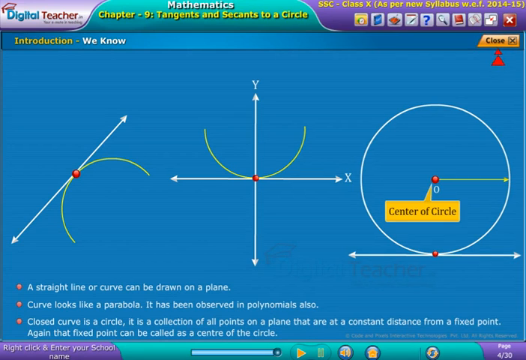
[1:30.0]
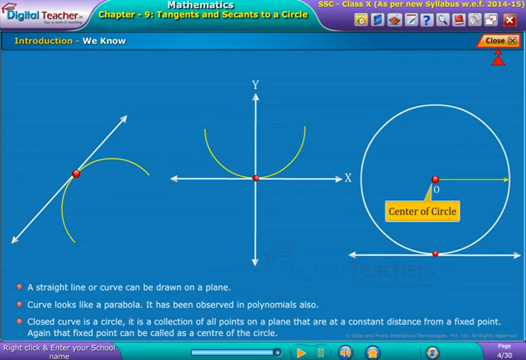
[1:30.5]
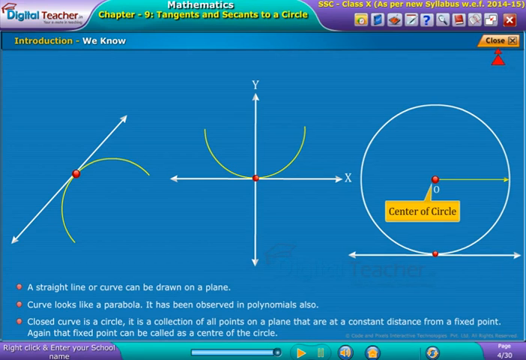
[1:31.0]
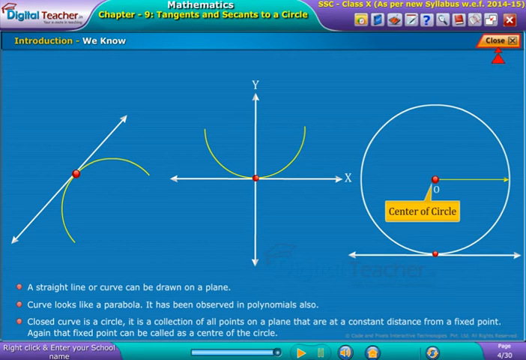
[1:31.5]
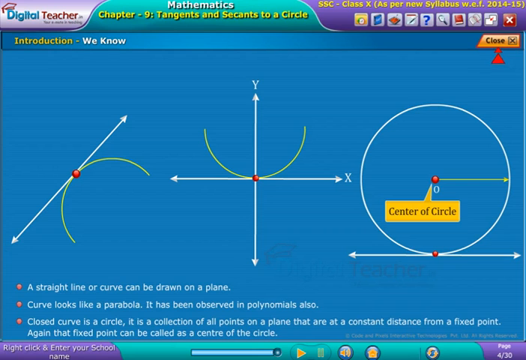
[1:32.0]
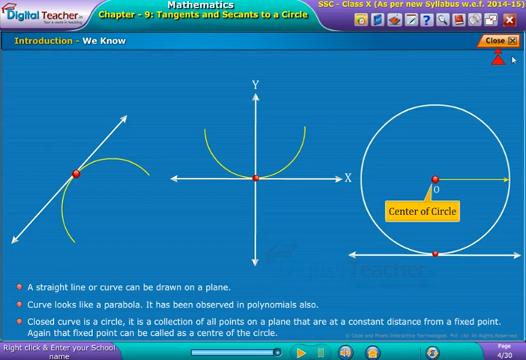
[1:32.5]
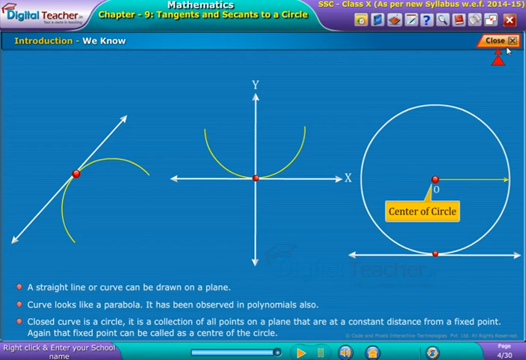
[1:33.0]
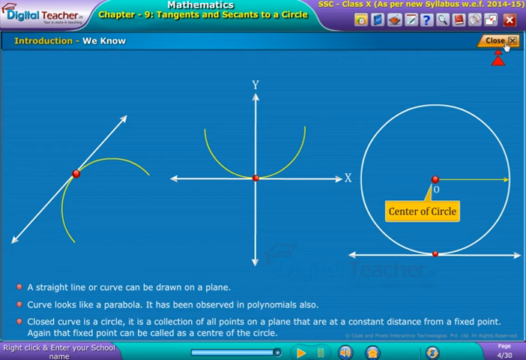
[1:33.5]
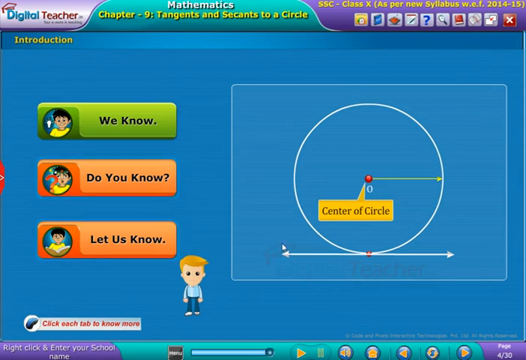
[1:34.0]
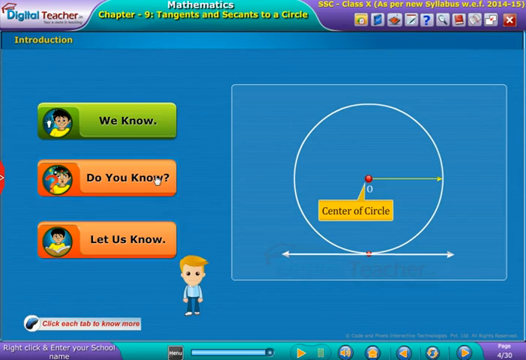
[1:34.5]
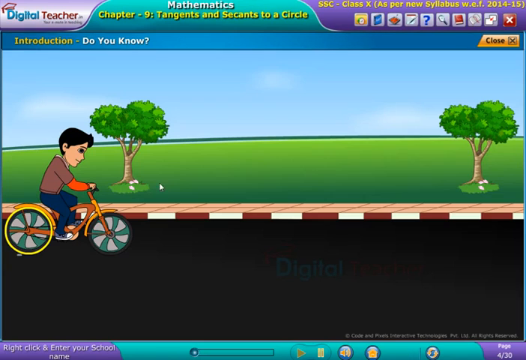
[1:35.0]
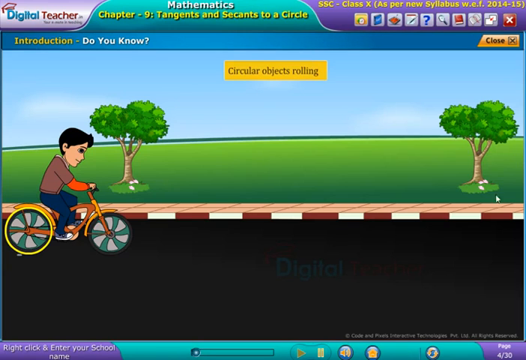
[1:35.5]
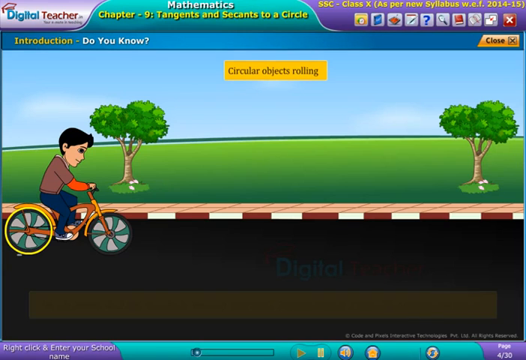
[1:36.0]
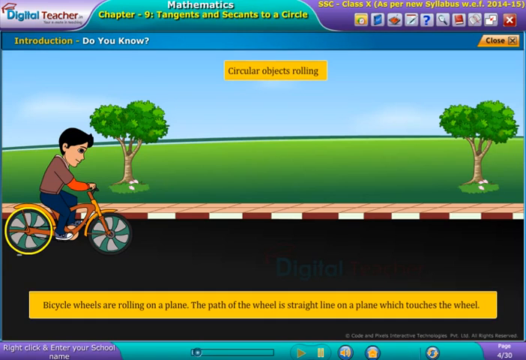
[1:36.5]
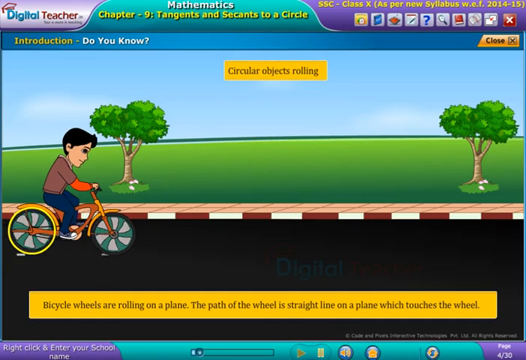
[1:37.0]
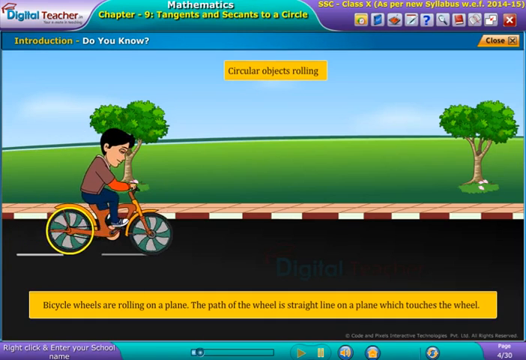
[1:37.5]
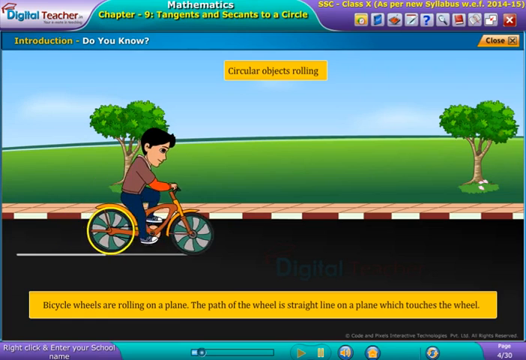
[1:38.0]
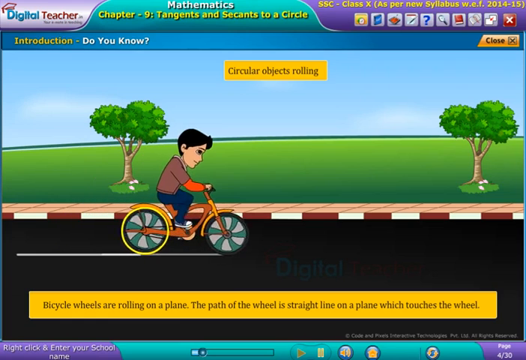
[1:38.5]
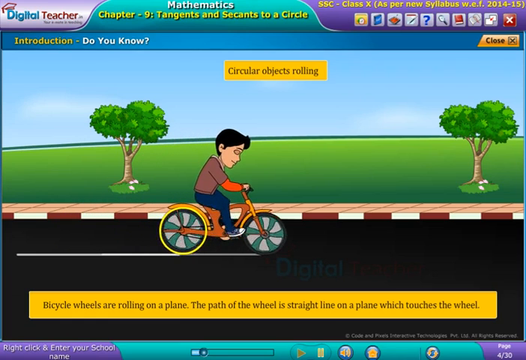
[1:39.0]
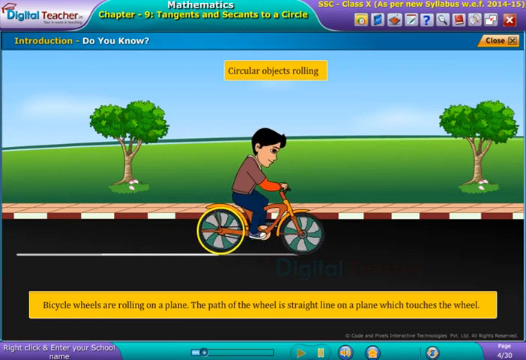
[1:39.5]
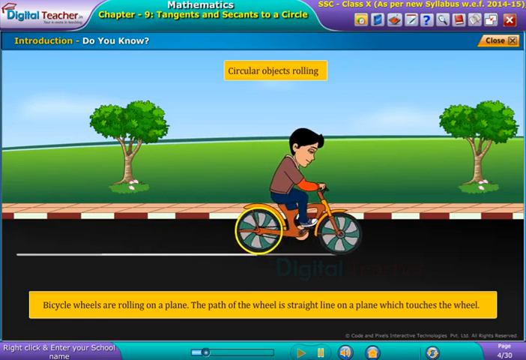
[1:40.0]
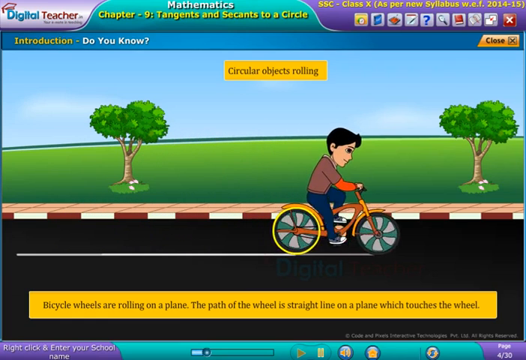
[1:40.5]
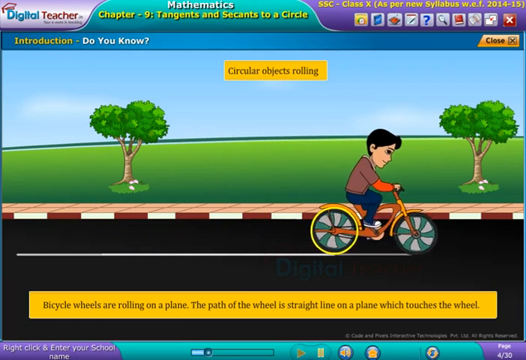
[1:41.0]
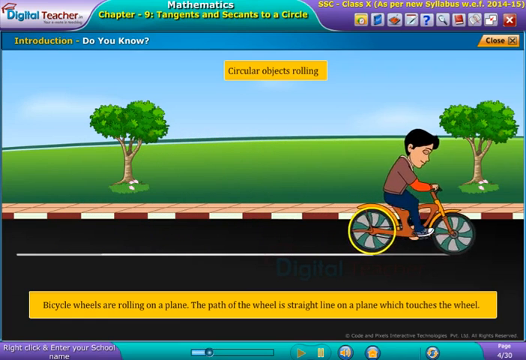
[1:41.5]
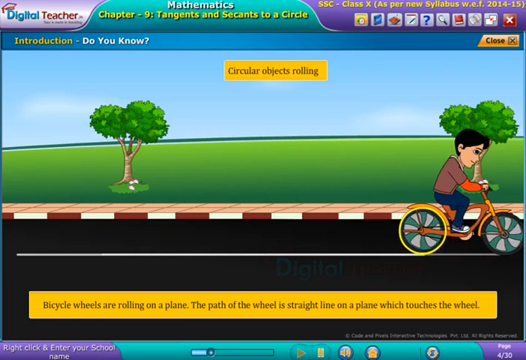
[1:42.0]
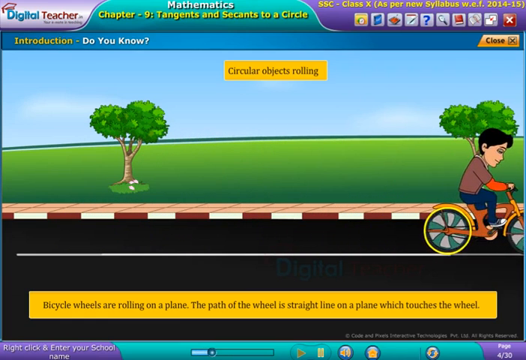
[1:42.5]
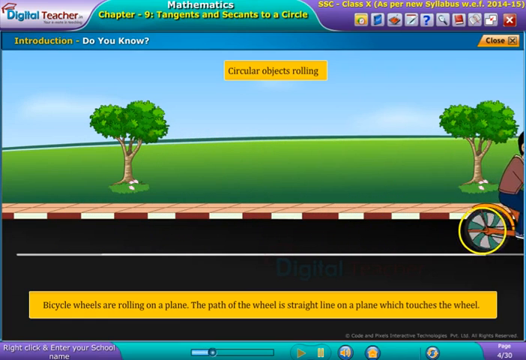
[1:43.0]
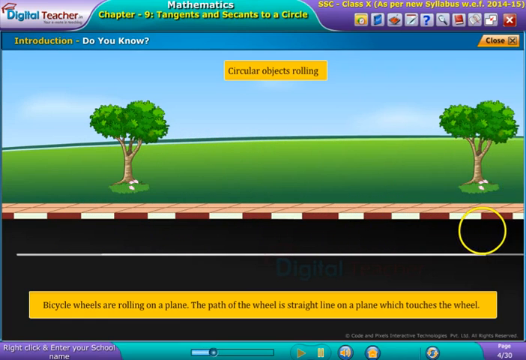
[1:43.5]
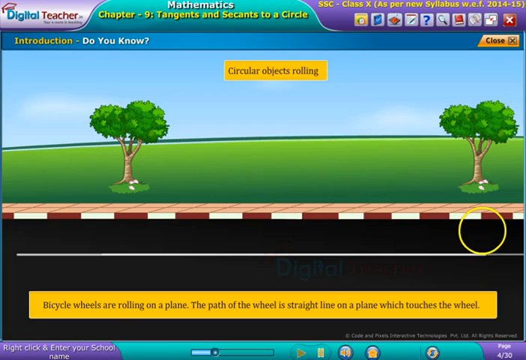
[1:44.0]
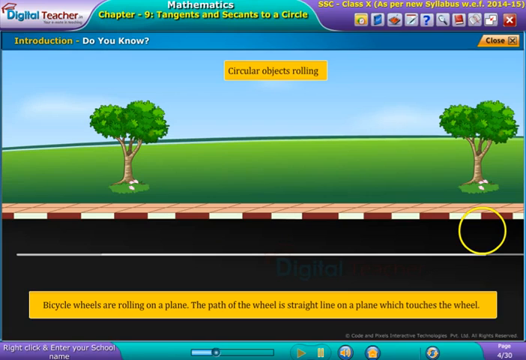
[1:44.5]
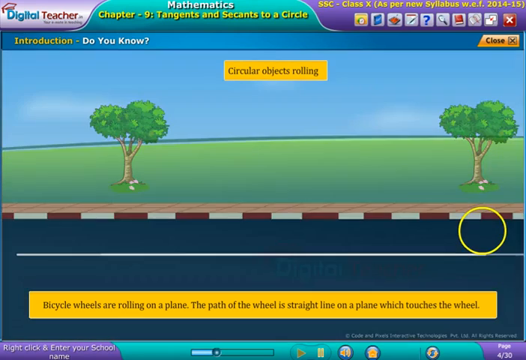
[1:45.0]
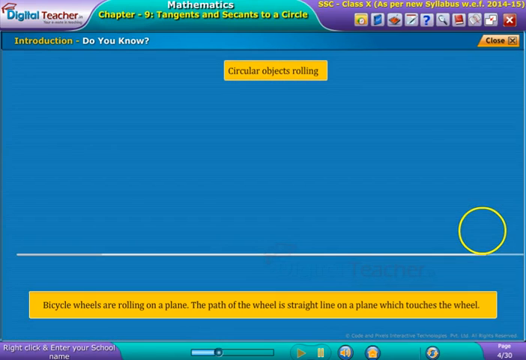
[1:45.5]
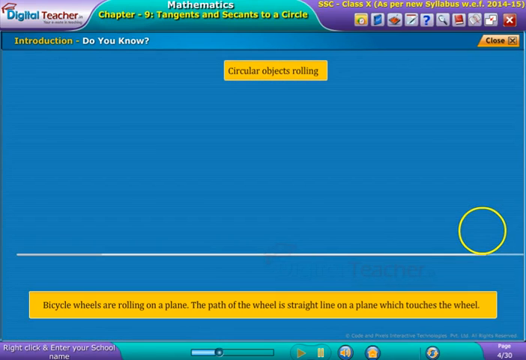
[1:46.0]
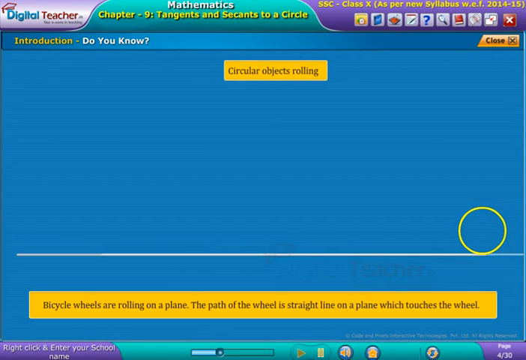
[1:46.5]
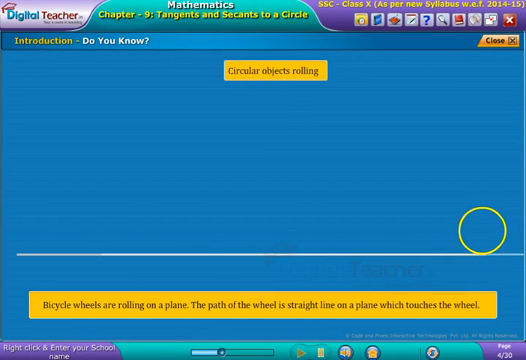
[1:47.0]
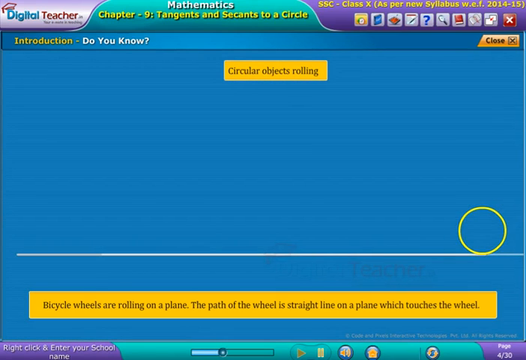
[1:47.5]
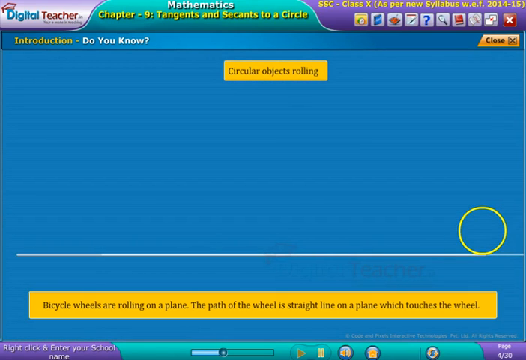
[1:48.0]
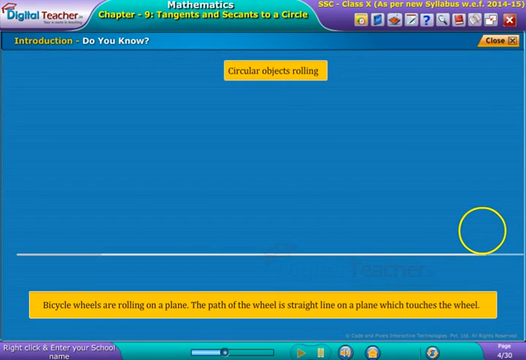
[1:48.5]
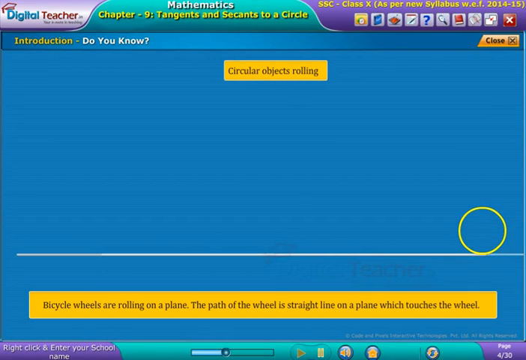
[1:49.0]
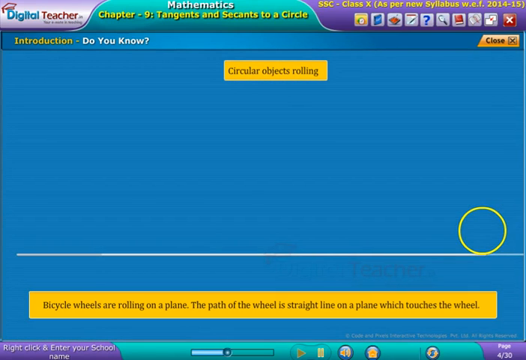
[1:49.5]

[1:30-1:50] The third line forms, showing the center of a circle. The yellow arrow still points to the right of the circle, and there is a straight, horizontal line at the very bottom. Another bullet point is added, reading "closed curve is a circle, is a collection of all points on a plane that are a constant distance from a fixed point" and "that fixed point can be called as a center of the circle." The main menu with "we know", "do you know", and "let us know" returns, and "do you know" is clicked. A boy on a bike kind of goes across to the right. At the top, text reads "circular objects rolling", and at the bottom, "bicycle wheels are rolling on a plane. The path of a wheel is a straight line on a plane which touches the wheel." As he goes forward, the boy disappears, leaving a yellow circle at the end of the horizontal line.